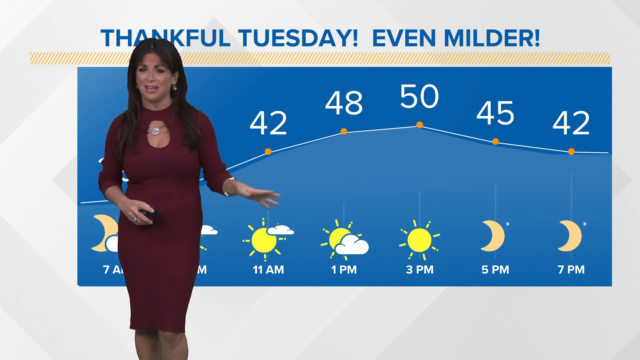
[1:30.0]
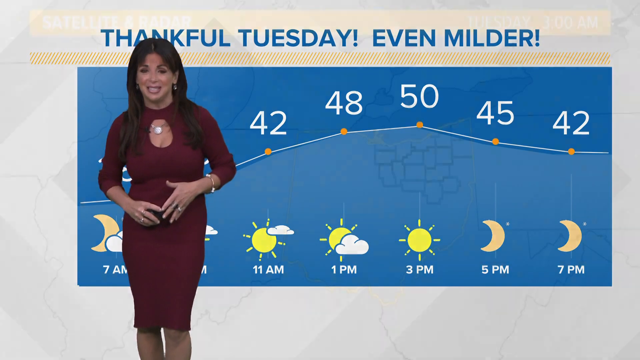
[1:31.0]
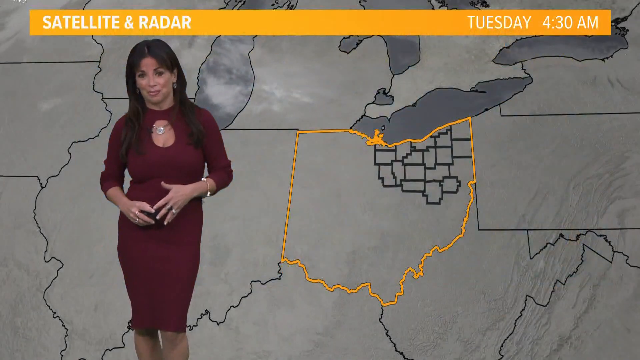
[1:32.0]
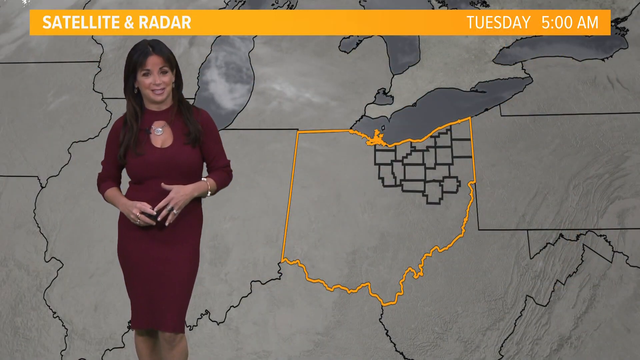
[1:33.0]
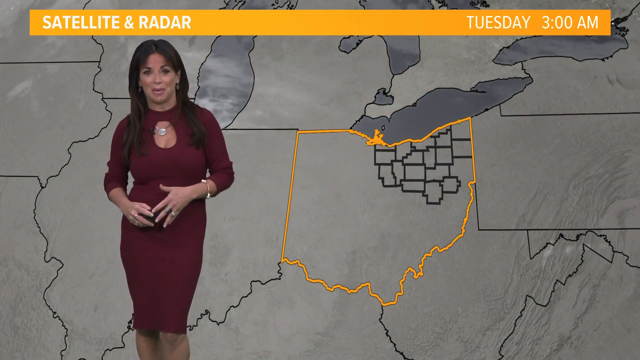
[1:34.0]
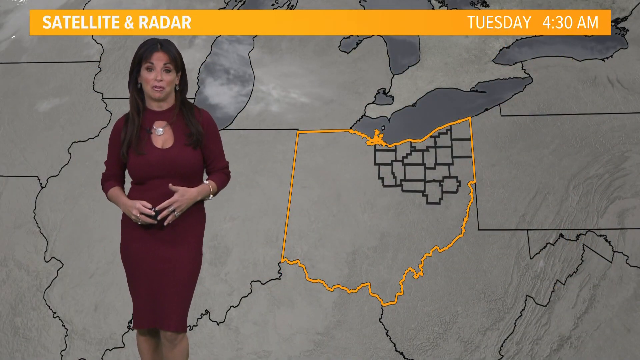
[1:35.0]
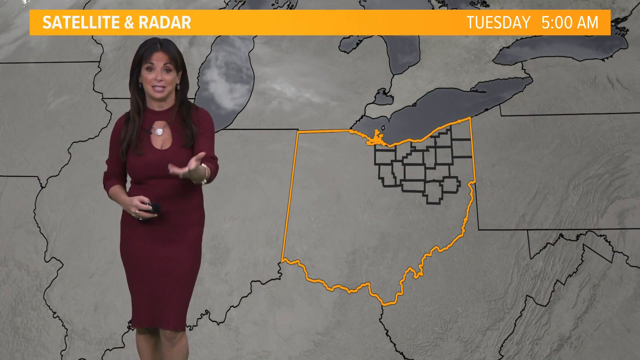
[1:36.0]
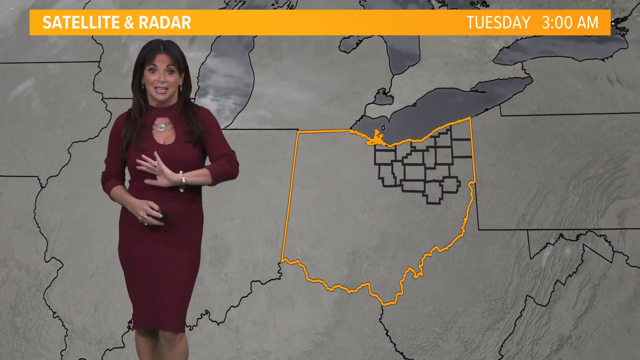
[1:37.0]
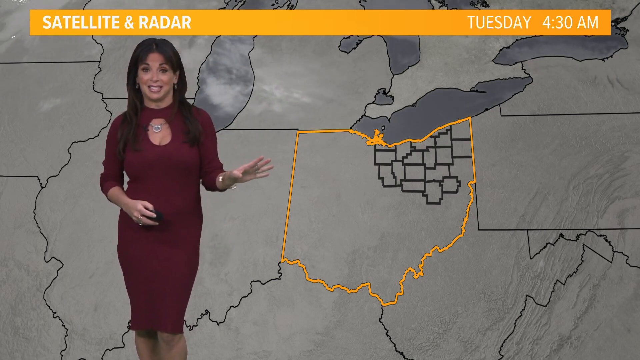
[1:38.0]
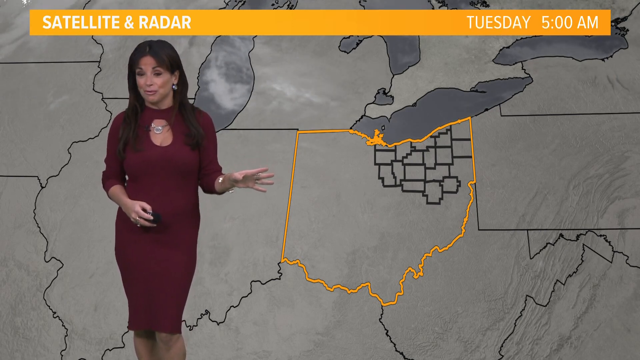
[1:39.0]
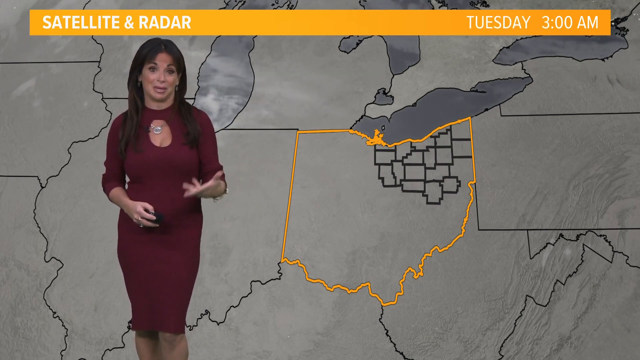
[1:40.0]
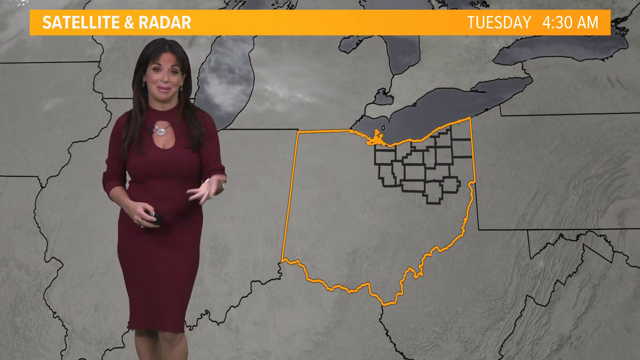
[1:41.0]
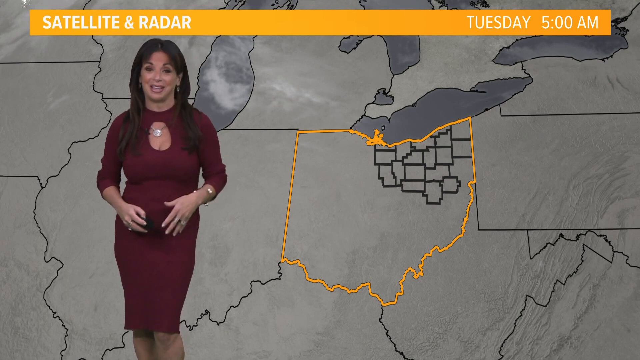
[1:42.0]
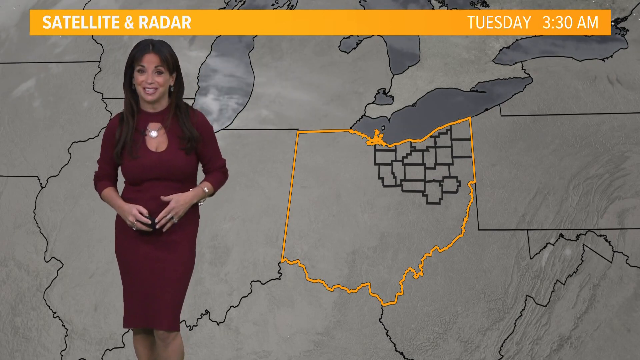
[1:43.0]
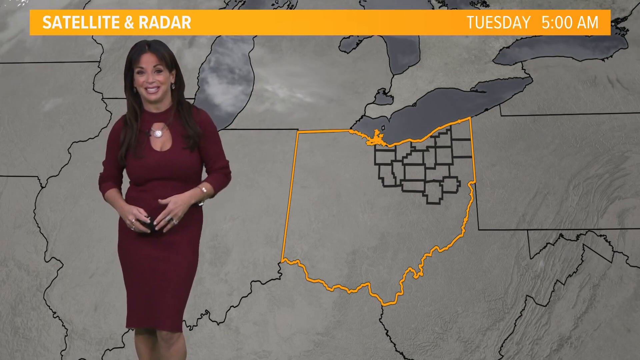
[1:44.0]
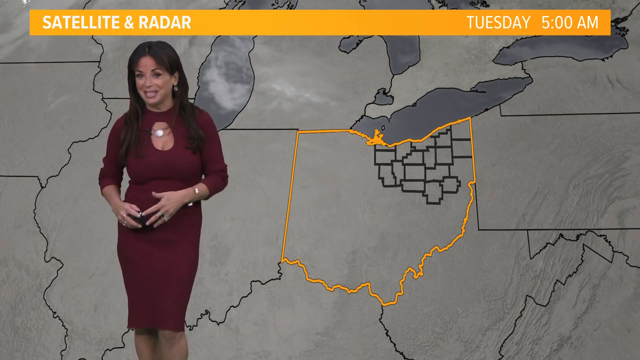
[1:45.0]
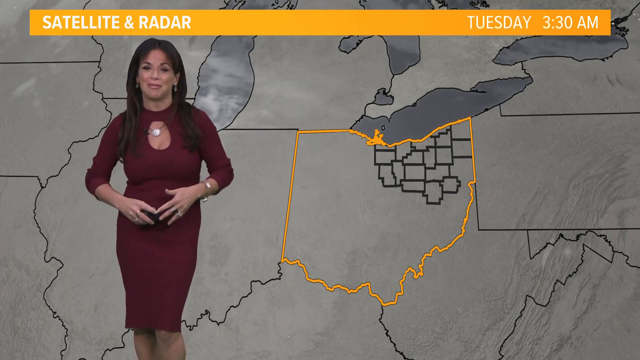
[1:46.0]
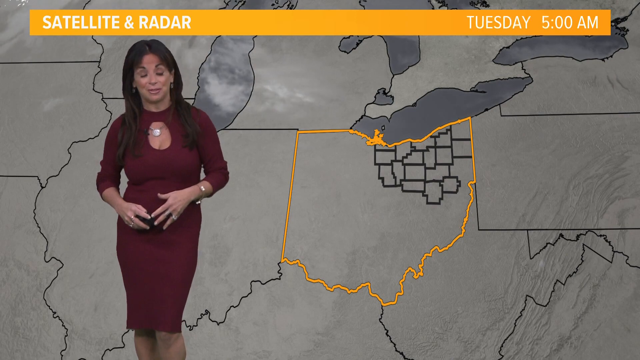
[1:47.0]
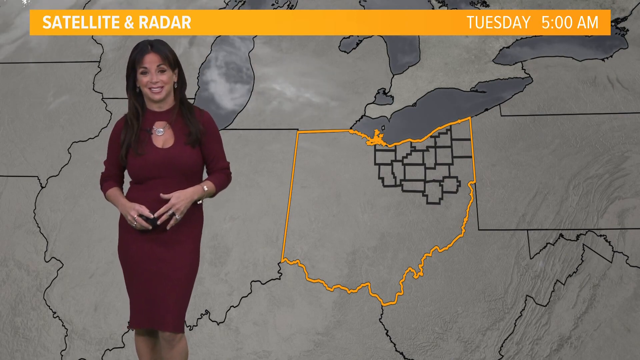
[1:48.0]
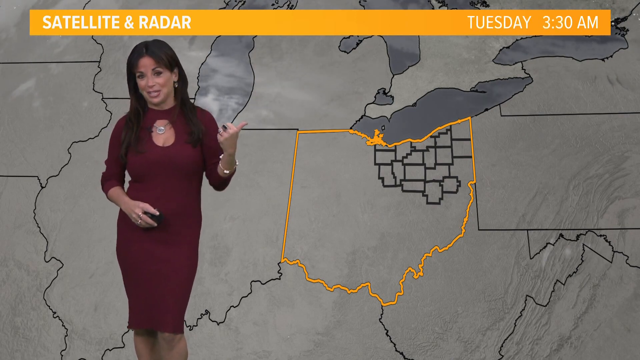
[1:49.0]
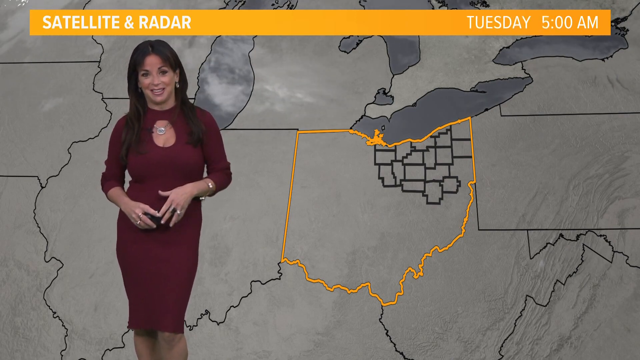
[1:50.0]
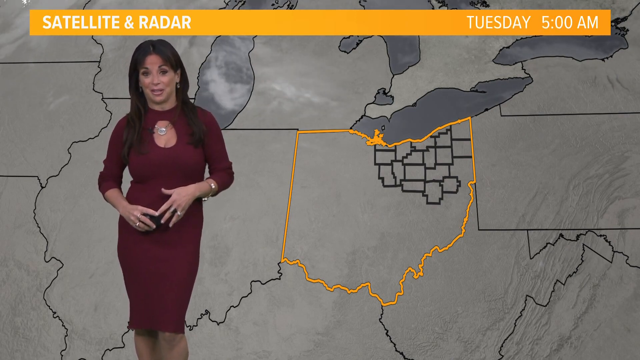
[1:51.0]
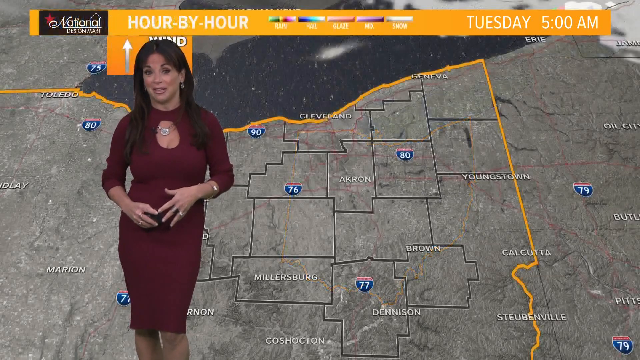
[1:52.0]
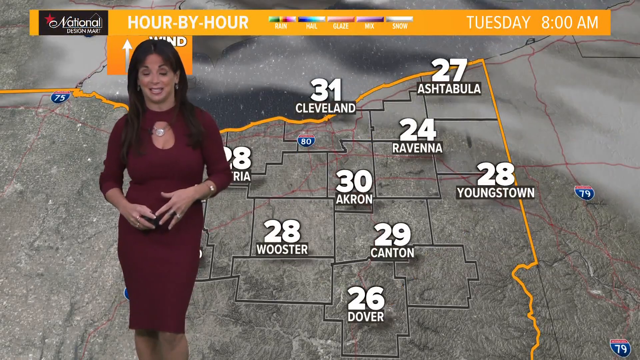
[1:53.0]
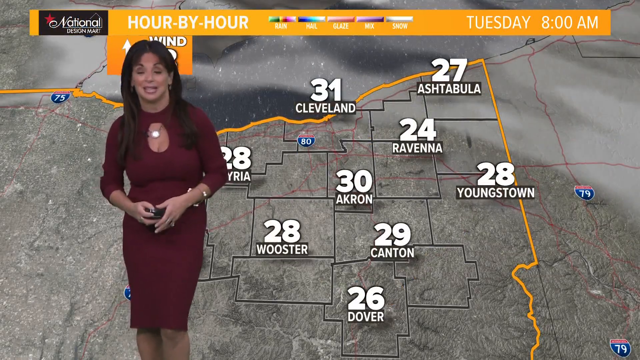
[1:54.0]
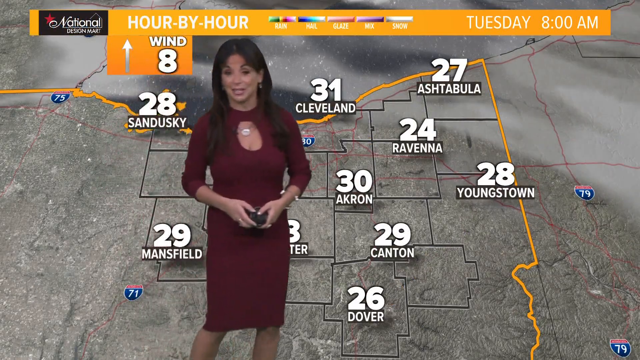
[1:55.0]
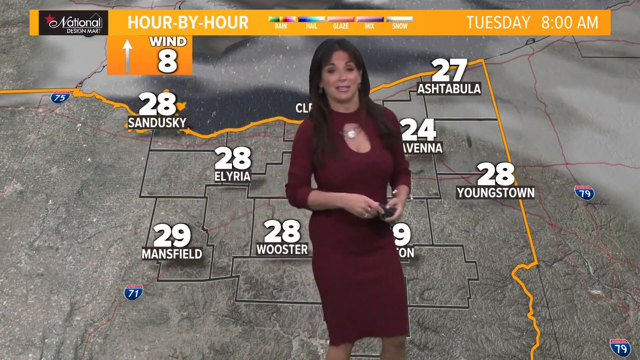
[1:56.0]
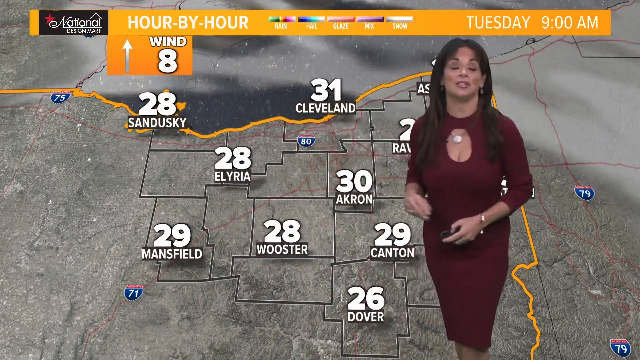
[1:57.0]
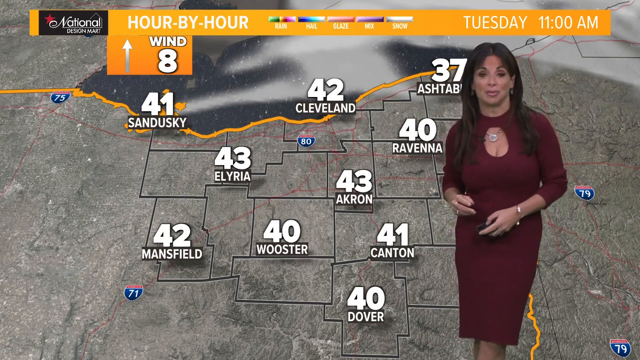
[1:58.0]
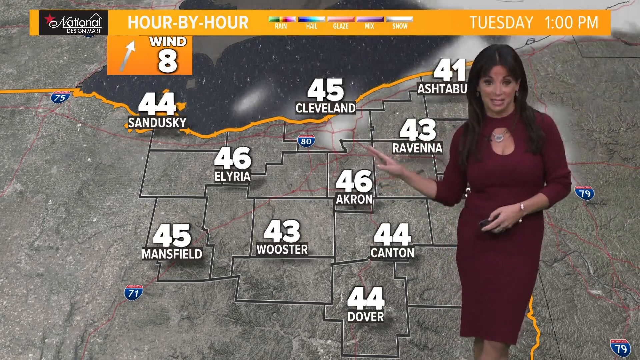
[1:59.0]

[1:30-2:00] The weather announcer from the news station stands on the left side of the screen. Behind her, a graphic shows different points during the day with the temperatures at each time, along with pictures of weather states: the sun, the sun near a cloud, and crescent moons for later in the day. The graphic disappears and another graphic appears behind the woman, to the right of the screen and just about centered, with a banner at the top reading "Satellite and radar. Tuesday, 5 a.m." The woman gestures with her hands. The graphic then changes as various cities are added, with temperatures visible above the city names.